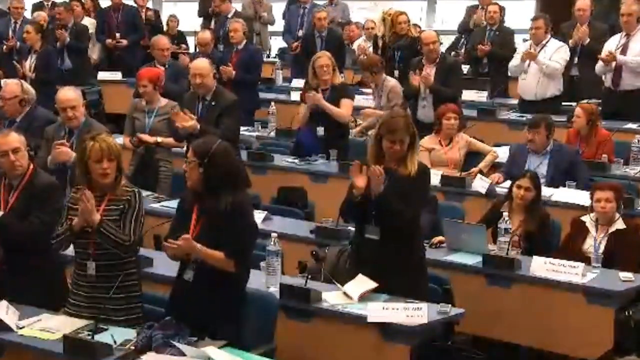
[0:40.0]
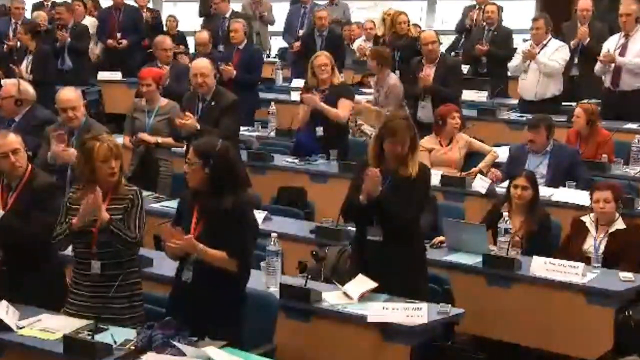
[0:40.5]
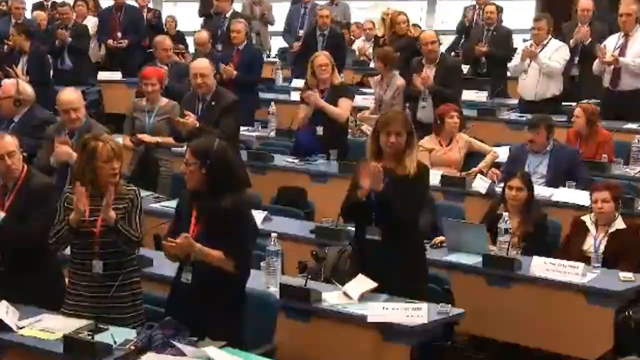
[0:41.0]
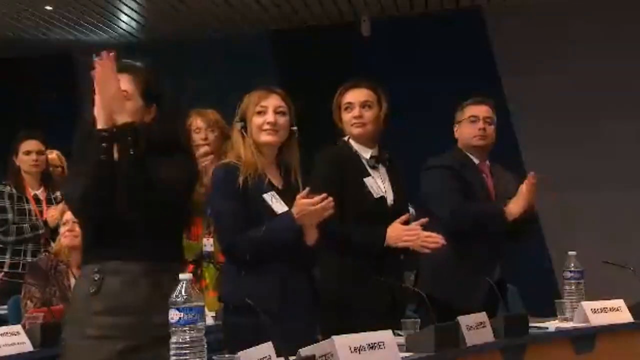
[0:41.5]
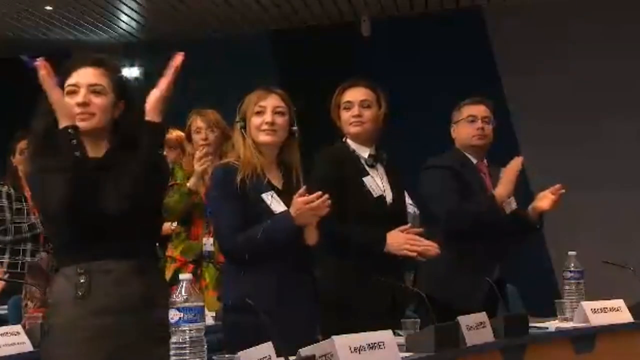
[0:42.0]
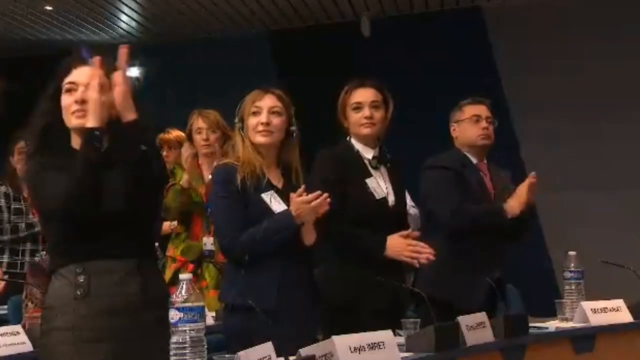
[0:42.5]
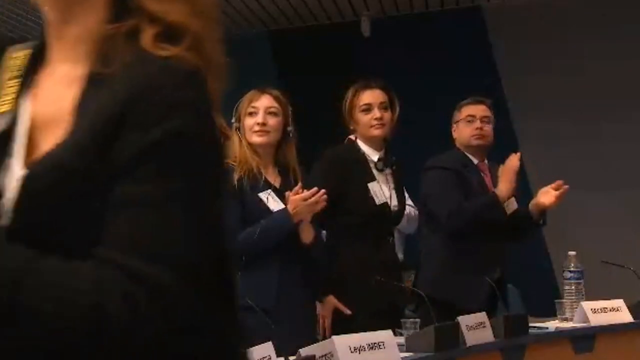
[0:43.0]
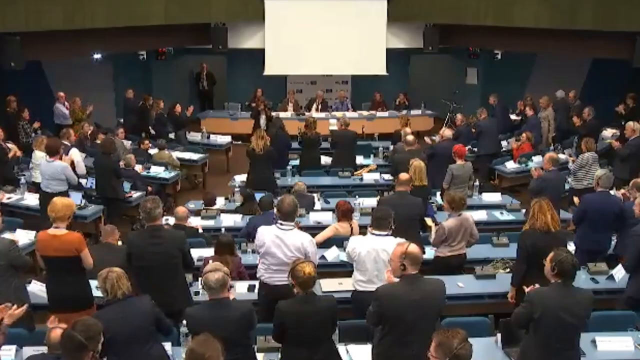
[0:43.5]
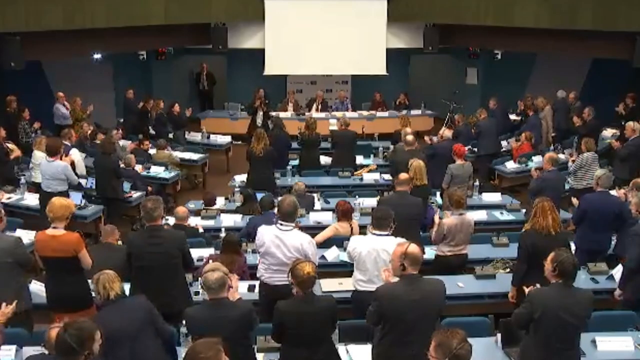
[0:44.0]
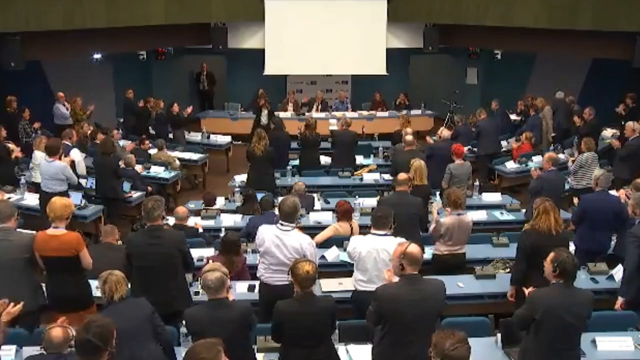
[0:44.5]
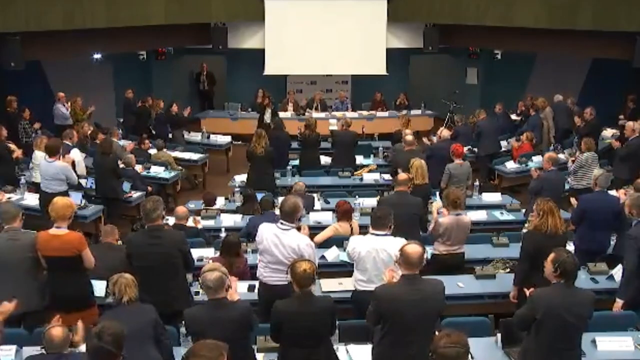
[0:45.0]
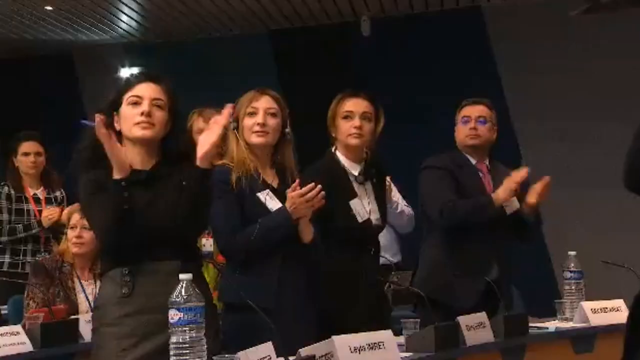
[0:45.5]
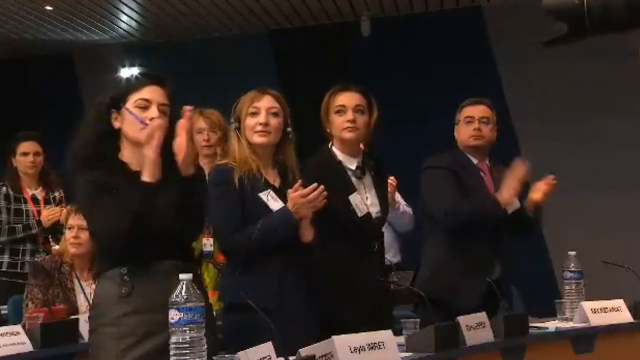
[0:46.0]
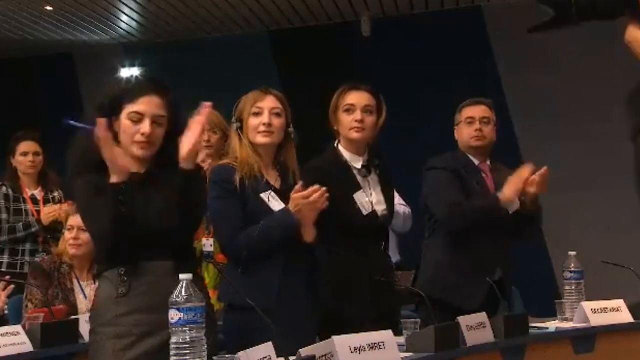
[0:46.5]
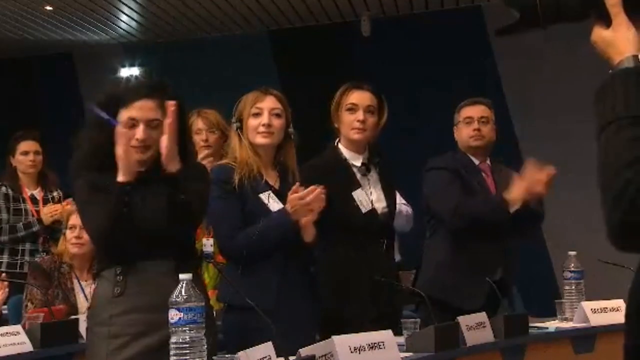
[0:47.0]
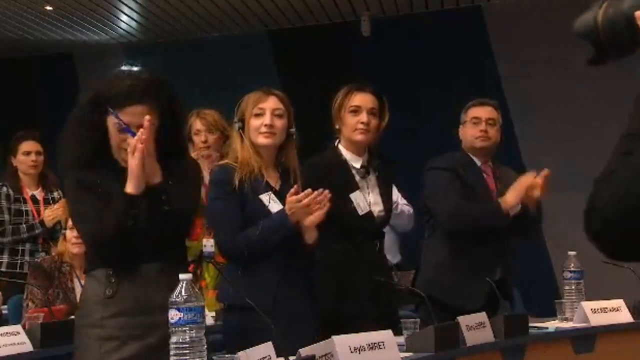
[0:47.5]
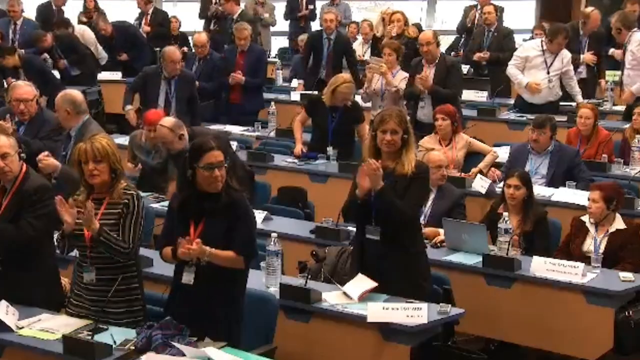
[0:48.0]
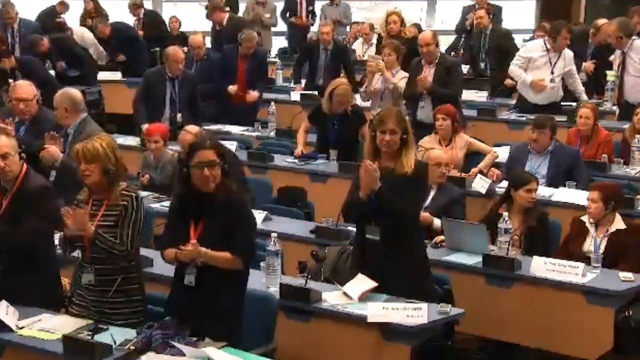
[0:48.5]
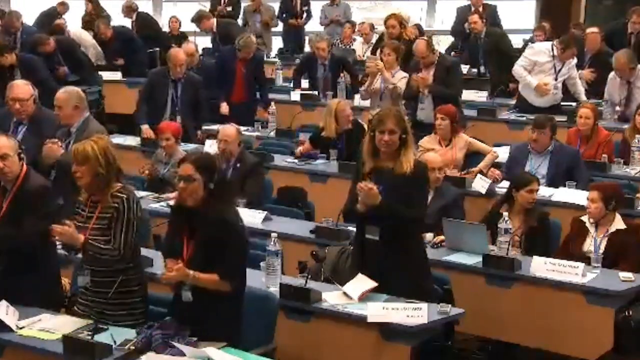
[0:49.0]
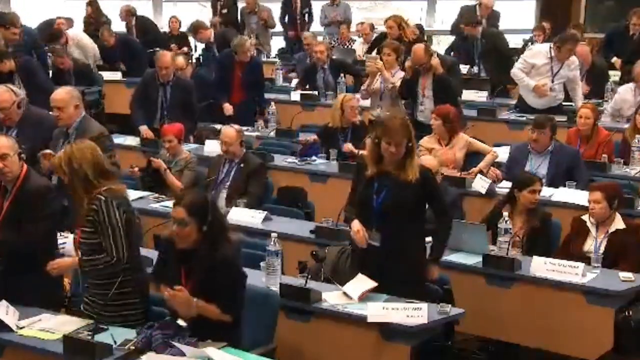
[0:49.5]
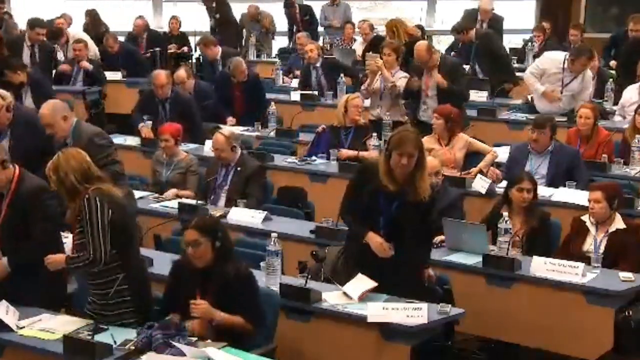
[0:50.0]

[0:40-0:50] The people continue clapping, seemingly for a prolonged period, and then appear to get ready to sit back down. Most of them have very happy-looking expressions, as if pleased with what happened. The people who stayed seated do not look too happy.